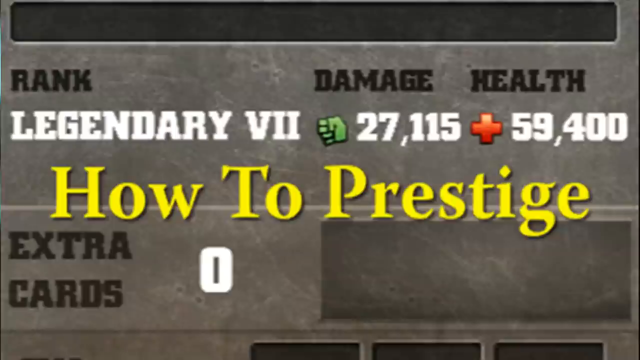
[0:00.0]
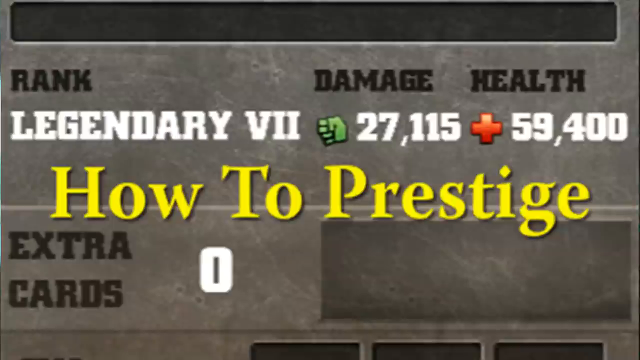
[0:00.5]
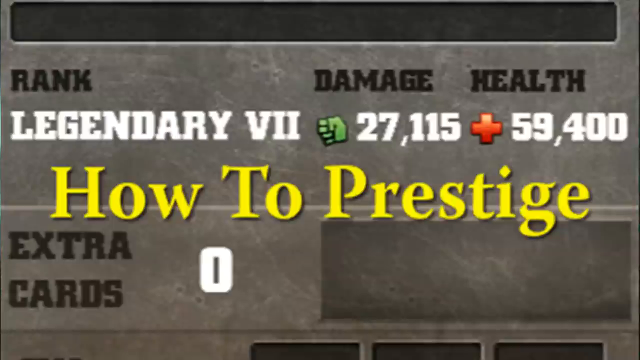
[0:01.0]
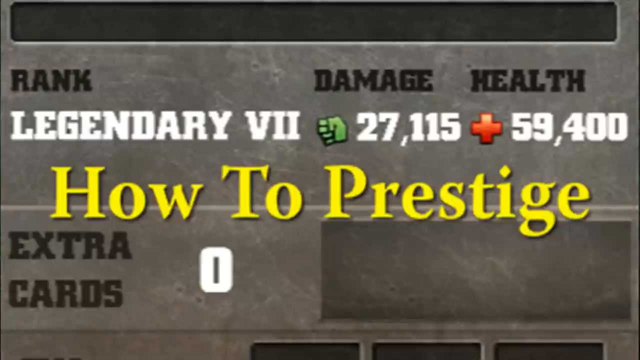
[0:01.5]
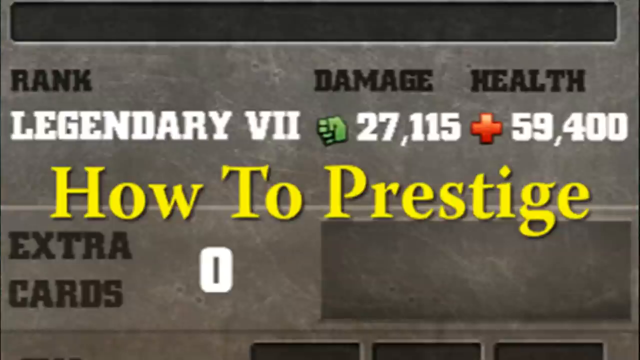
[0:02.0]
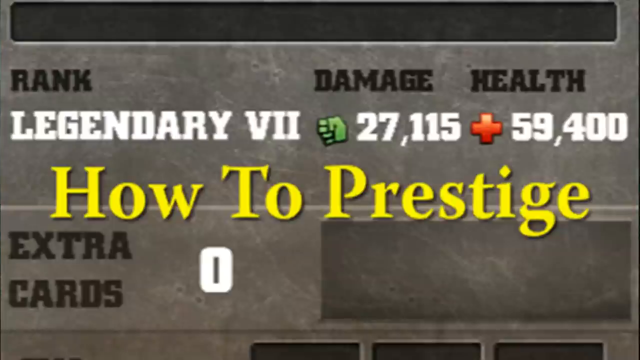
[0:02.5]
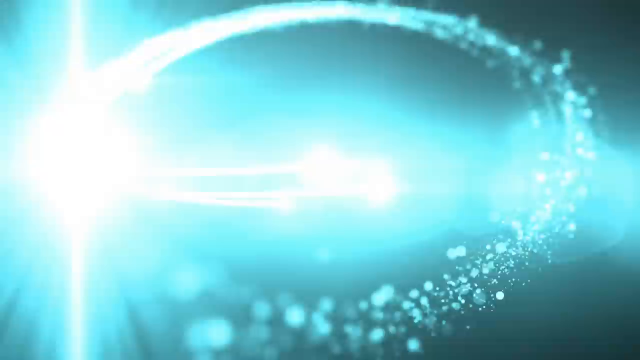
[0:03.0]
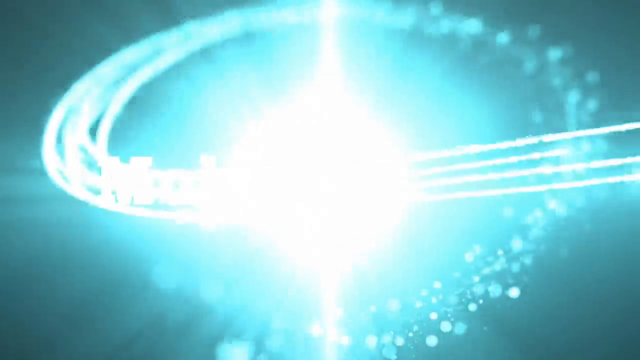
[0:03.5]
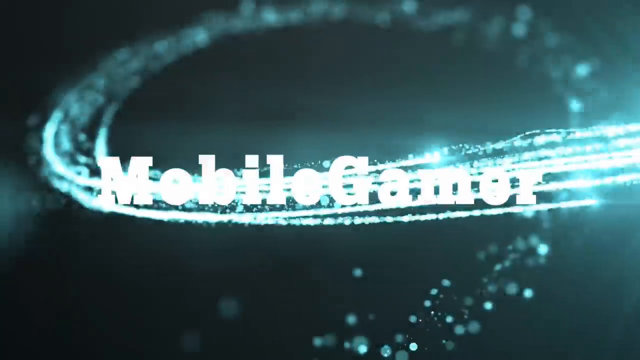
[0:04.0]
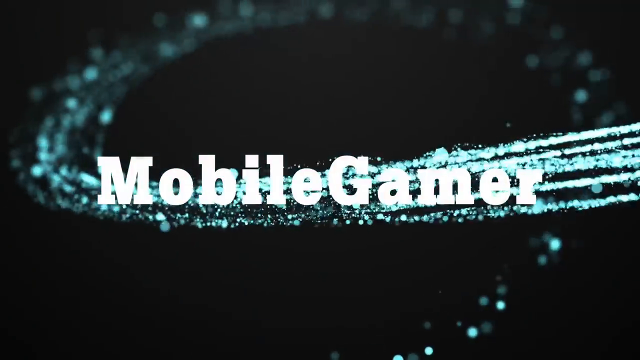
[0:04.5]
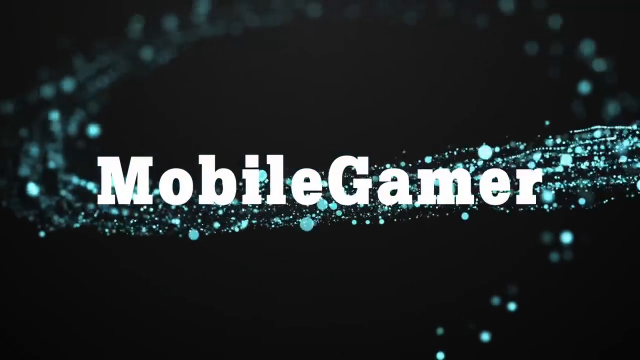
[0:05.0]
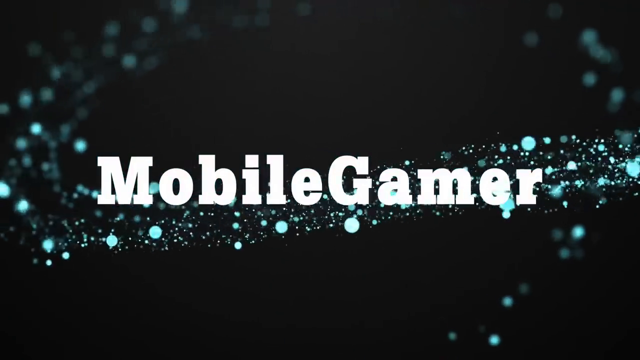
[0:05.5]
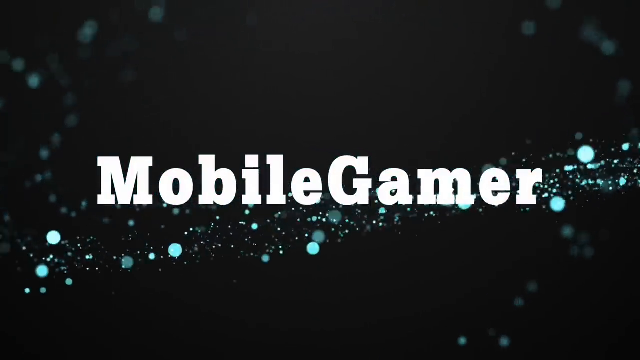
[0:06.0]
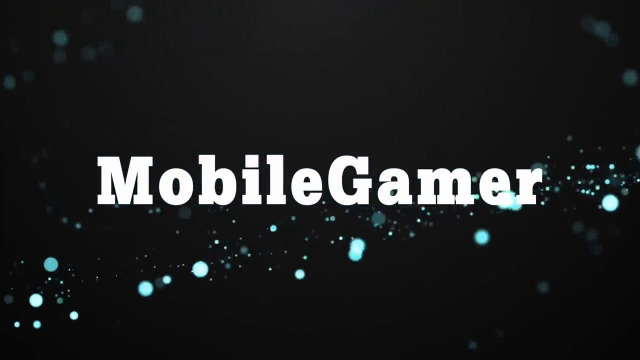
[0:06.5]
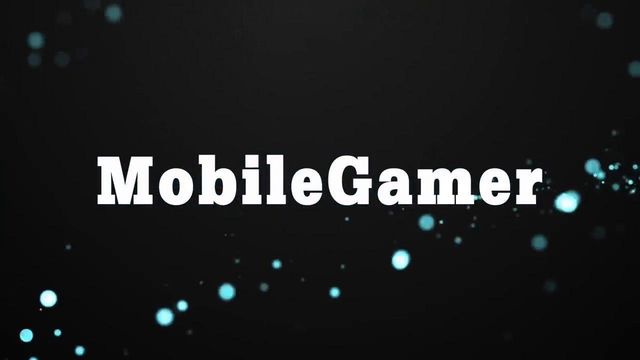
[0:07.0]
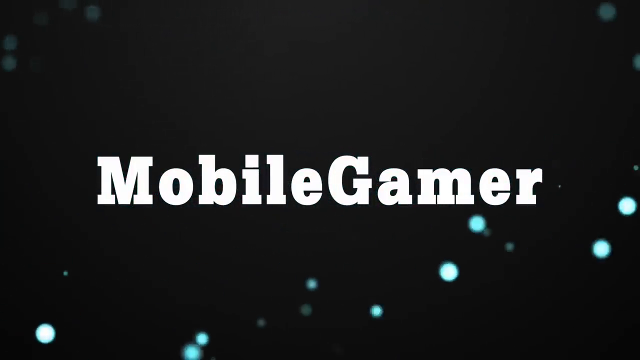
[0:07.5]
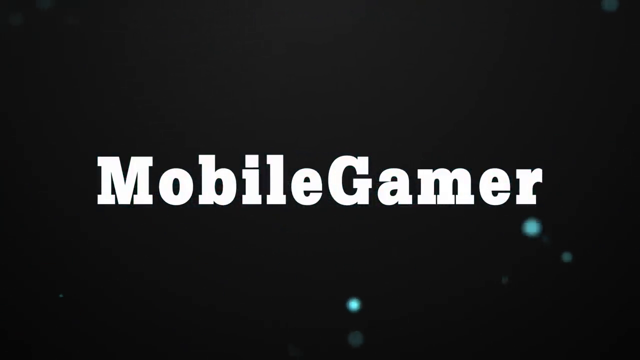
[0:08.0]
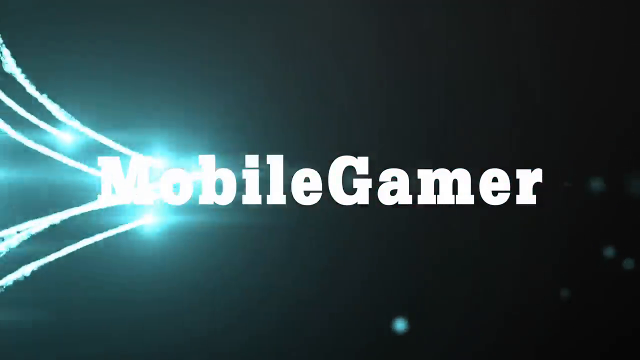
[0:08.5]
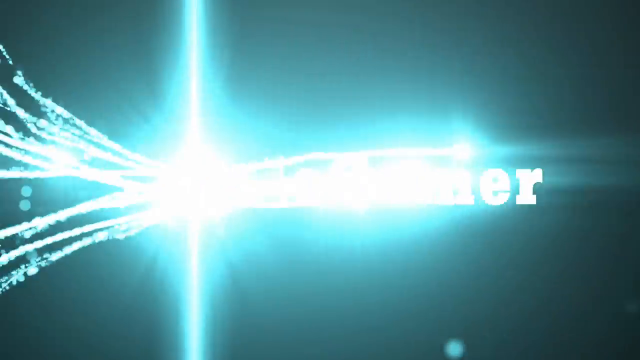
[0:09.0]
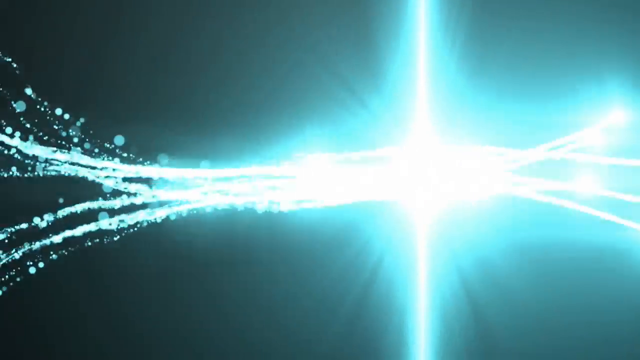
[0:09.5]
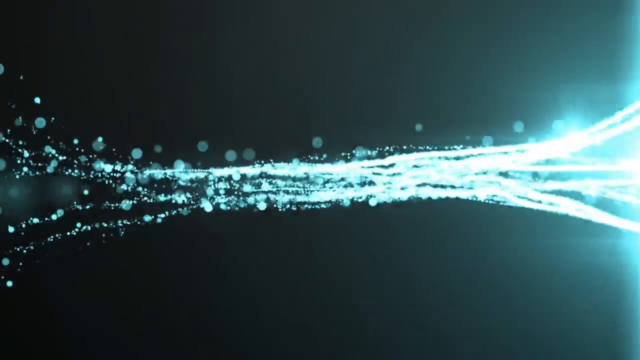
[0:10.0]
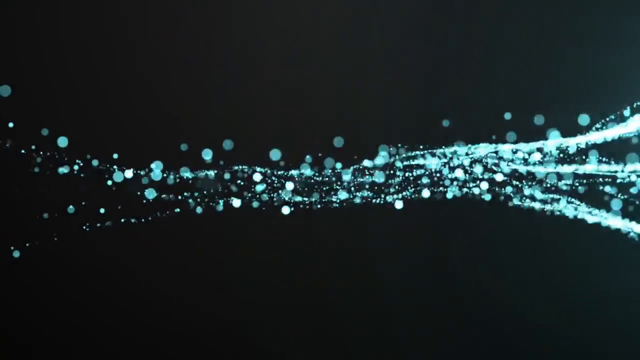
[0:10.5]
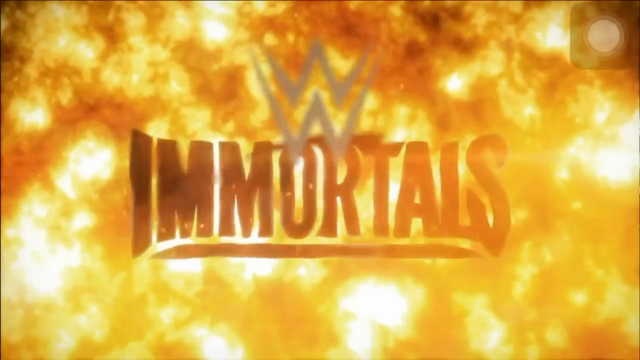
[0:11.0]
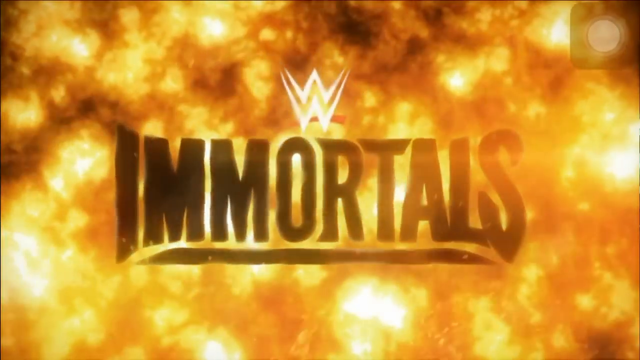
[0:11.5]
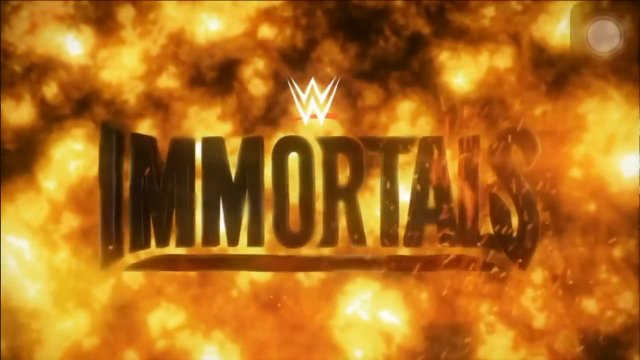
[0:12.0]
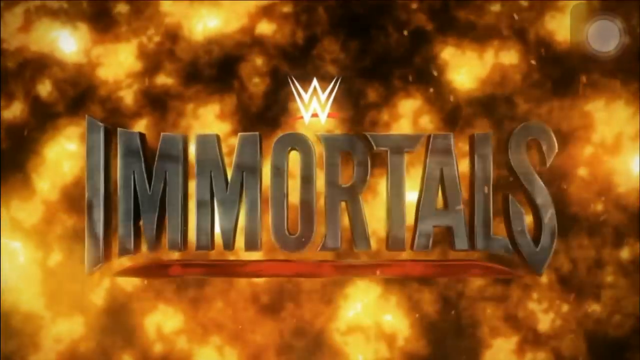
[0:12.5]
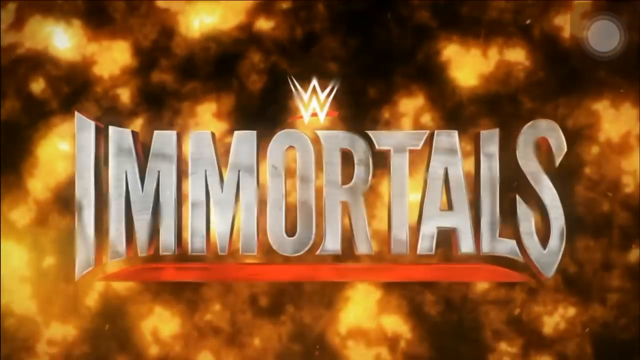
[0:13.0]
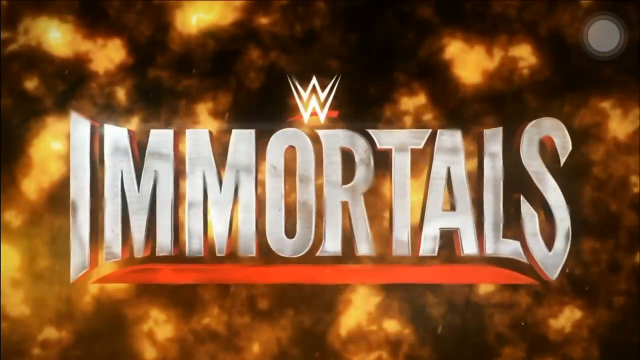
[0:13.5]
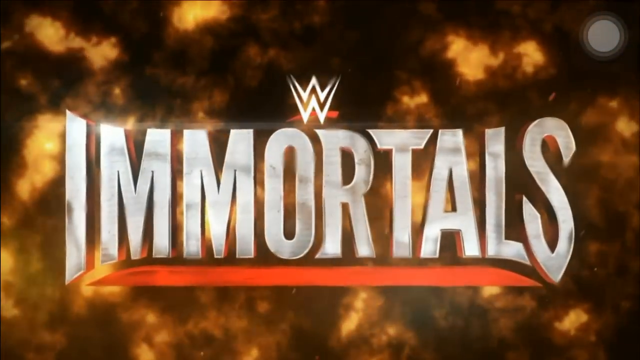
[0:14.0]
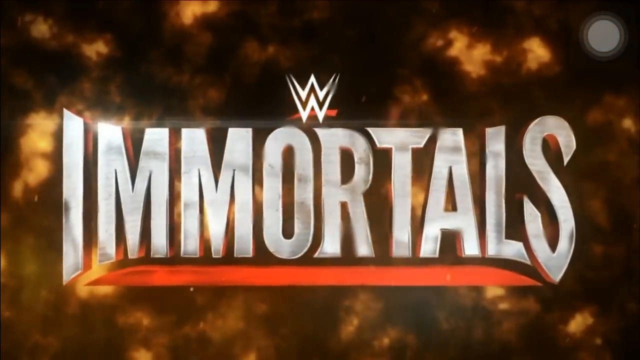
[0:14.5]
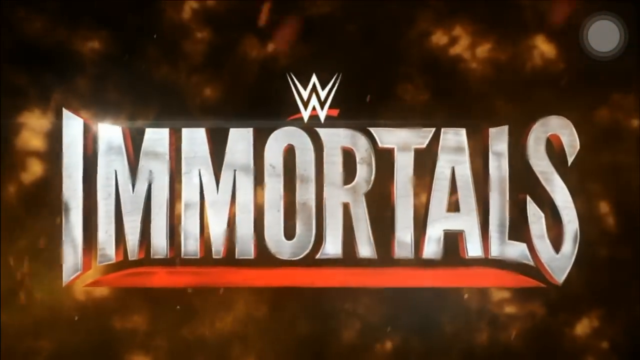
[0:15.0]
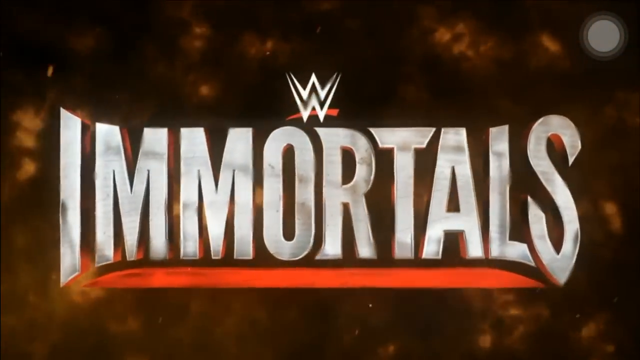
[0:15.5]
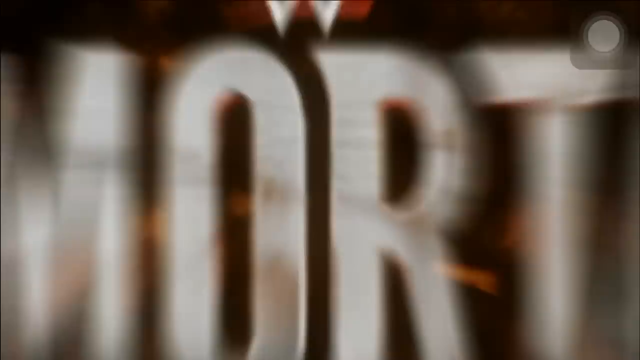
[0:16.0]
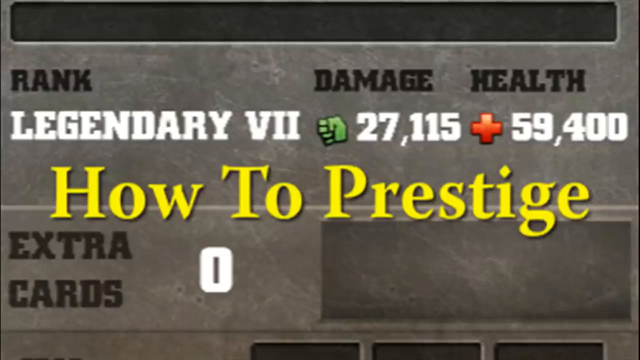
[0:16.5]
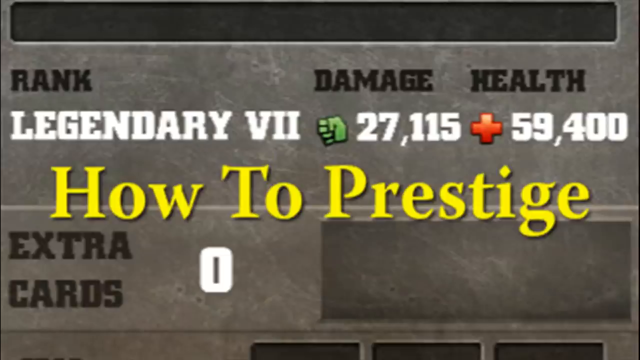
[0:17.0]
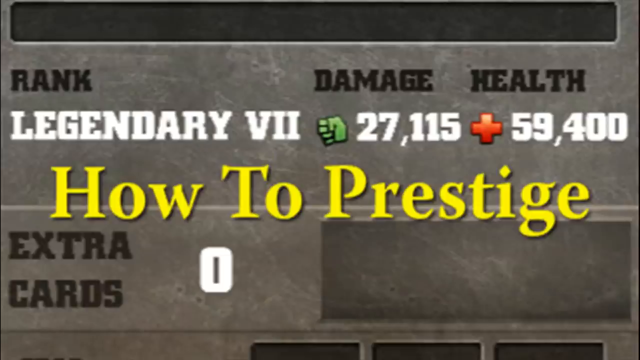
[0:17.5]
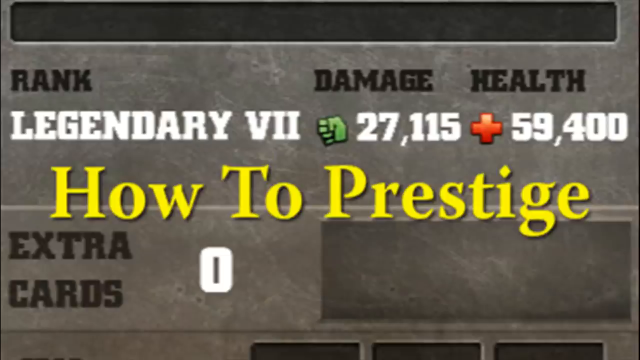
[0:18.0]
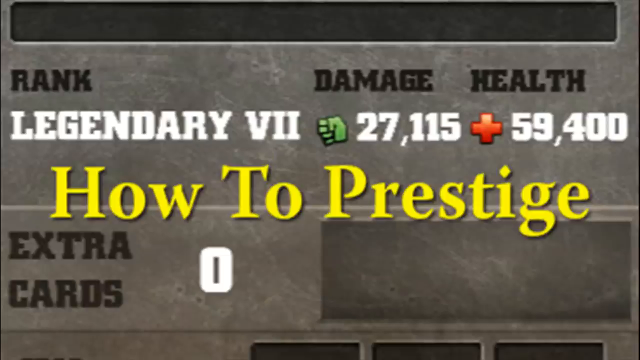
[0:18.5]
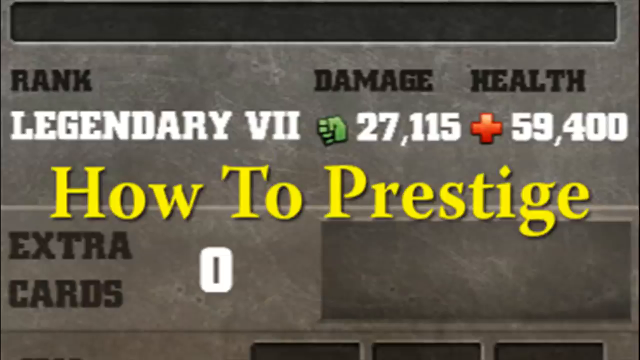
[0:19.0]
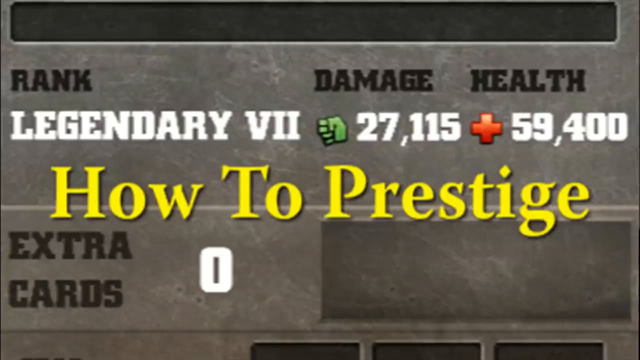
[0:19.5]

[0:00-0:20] The video appears to show a video game. On-screen text reads "how to prestige." Extra cards, damage, health and "mobile gamers" are mentioned, so it is apparently a mobile game. Sparkles and a lot of blue light move across the screen. Then the text "Immortals" and "WWE Immortals" appears, suggesting it may be a wrestling game. The game seems to involve cards, damage, health and rank. The text "how to prestige" appears once more before the shot ends.